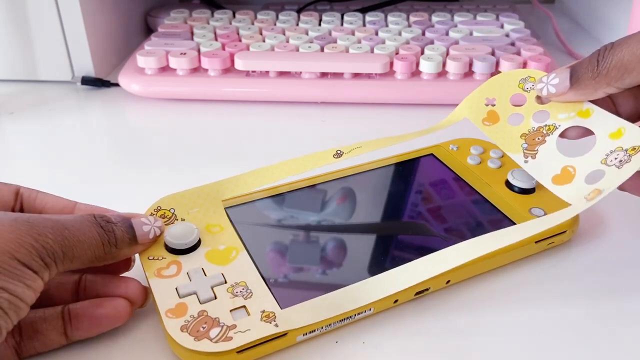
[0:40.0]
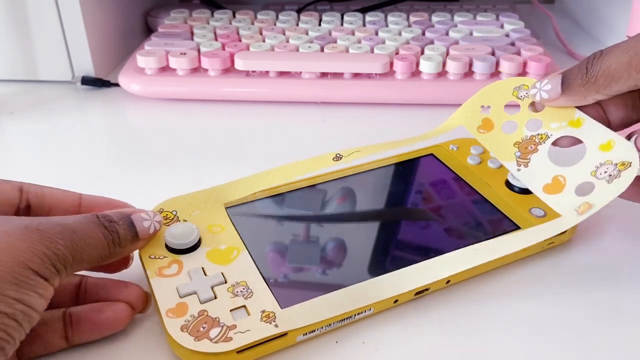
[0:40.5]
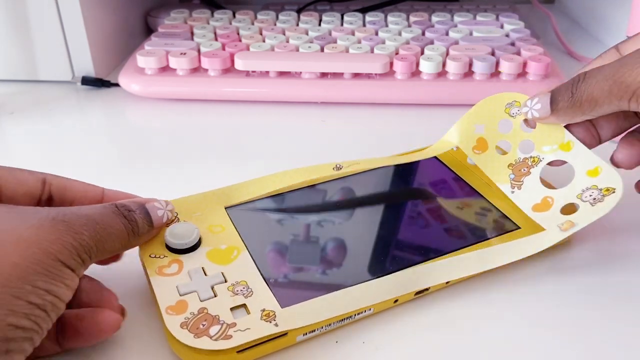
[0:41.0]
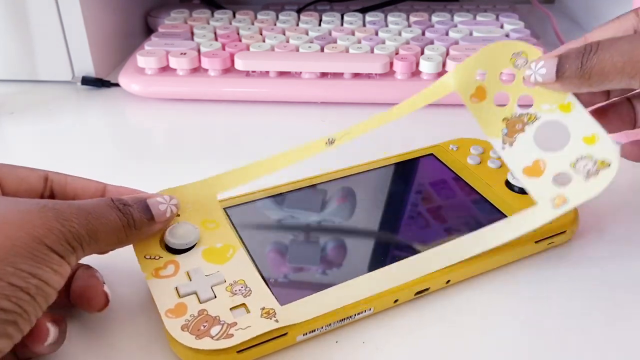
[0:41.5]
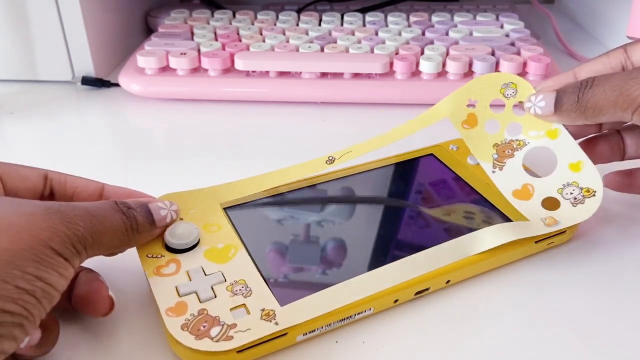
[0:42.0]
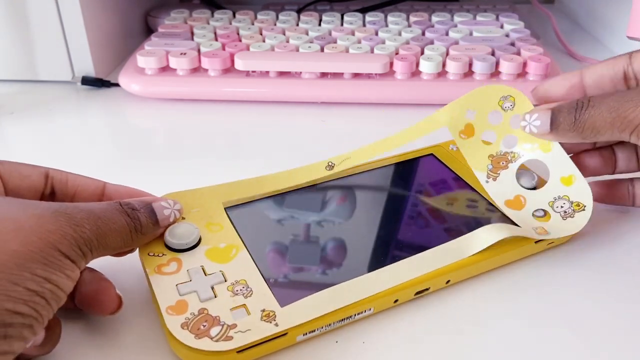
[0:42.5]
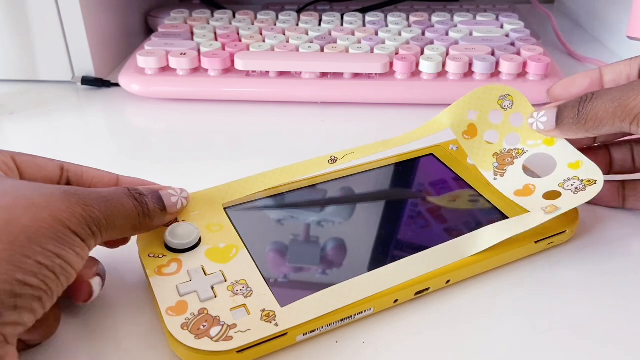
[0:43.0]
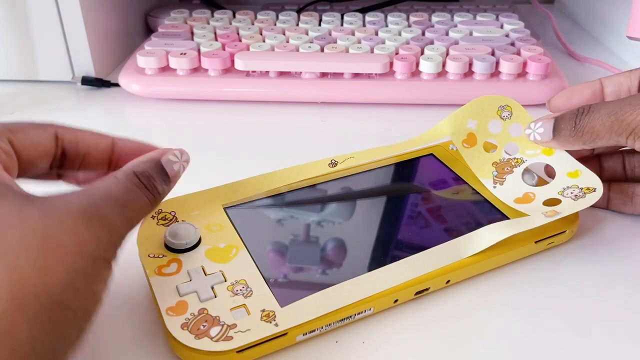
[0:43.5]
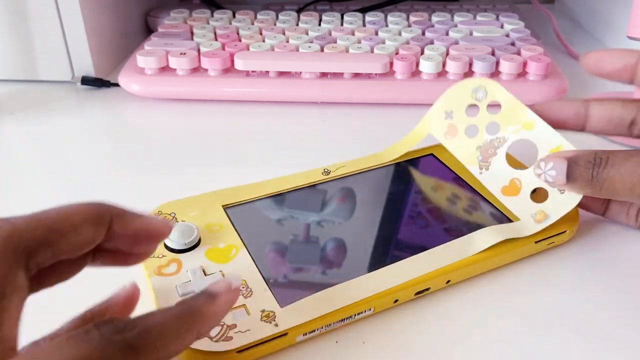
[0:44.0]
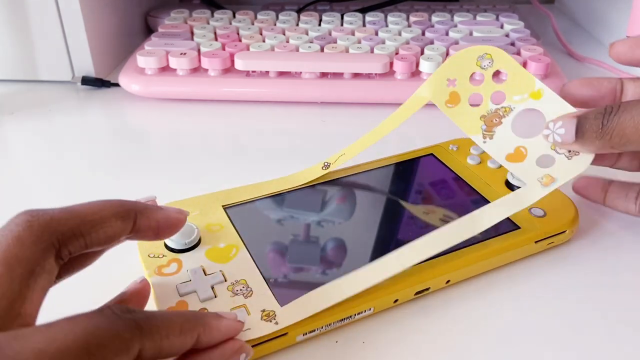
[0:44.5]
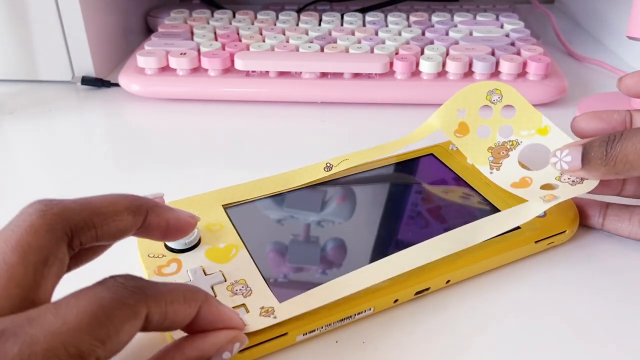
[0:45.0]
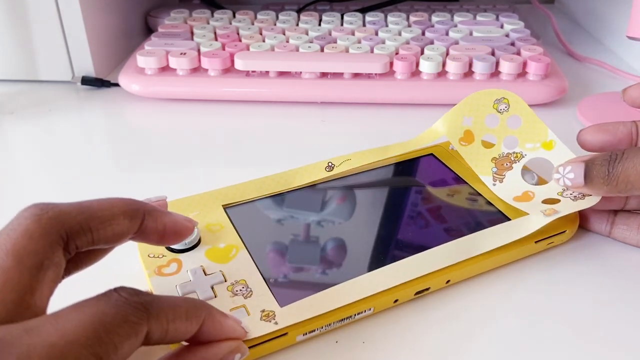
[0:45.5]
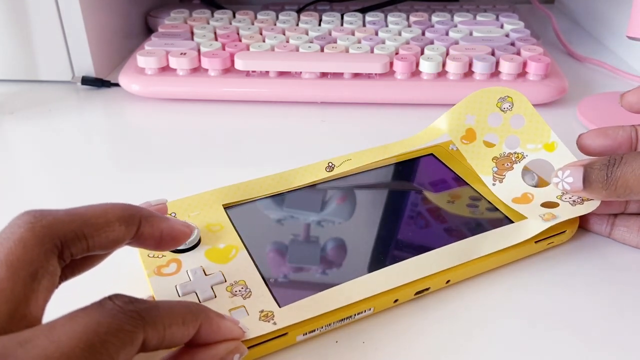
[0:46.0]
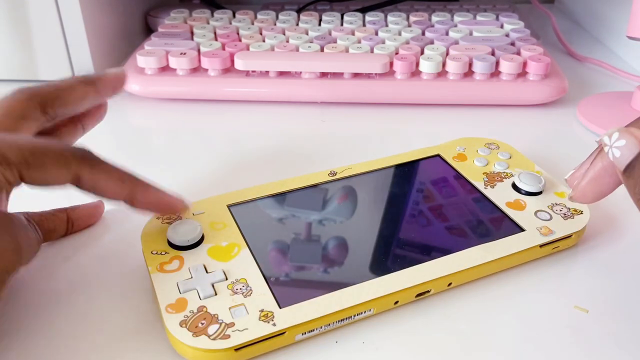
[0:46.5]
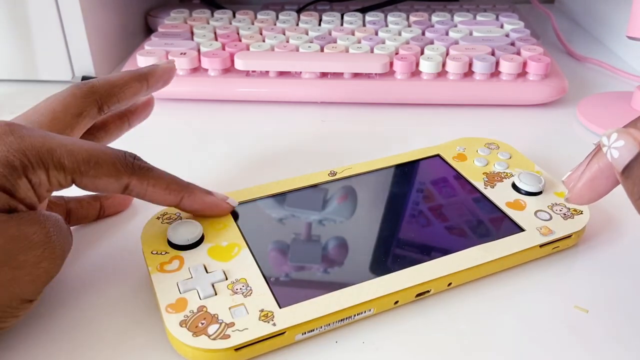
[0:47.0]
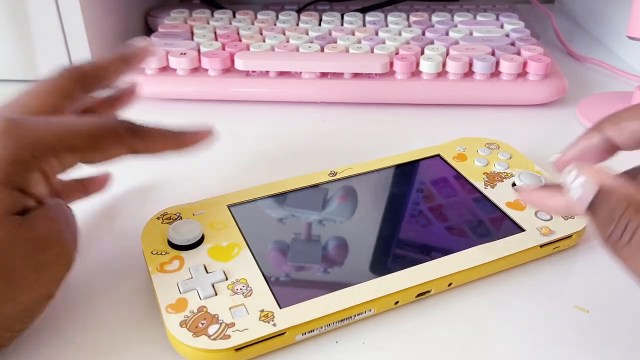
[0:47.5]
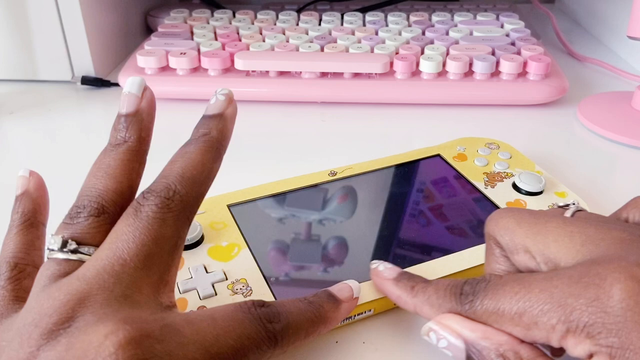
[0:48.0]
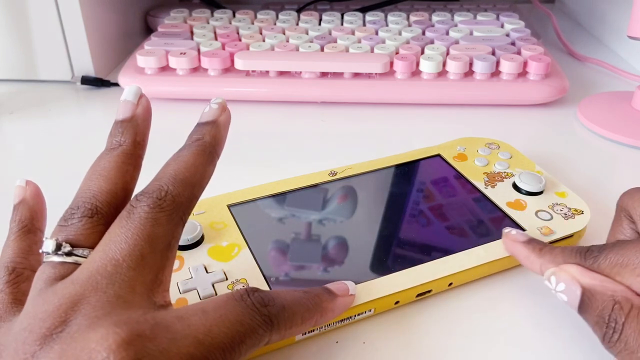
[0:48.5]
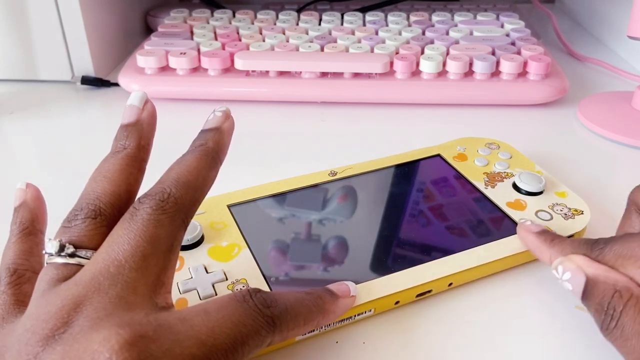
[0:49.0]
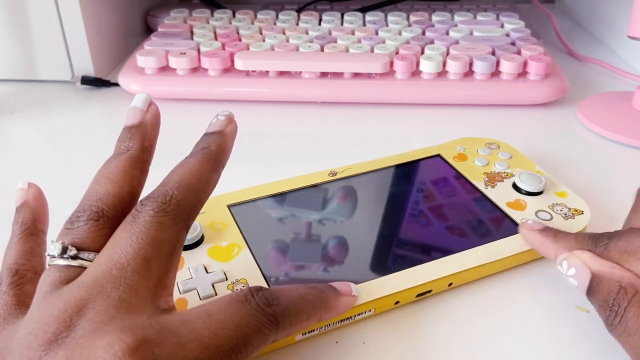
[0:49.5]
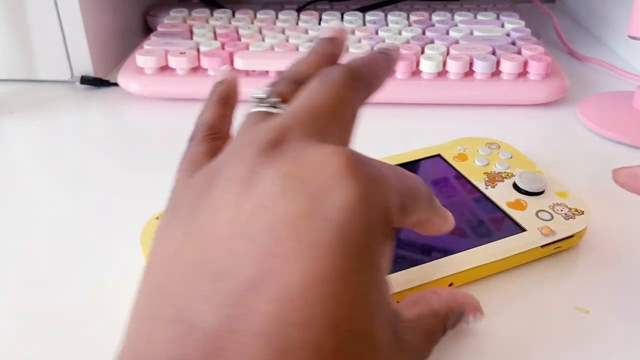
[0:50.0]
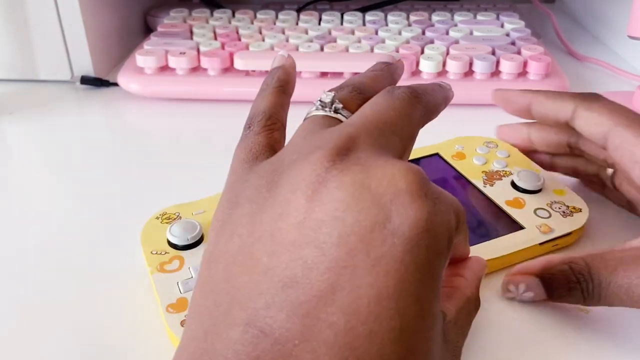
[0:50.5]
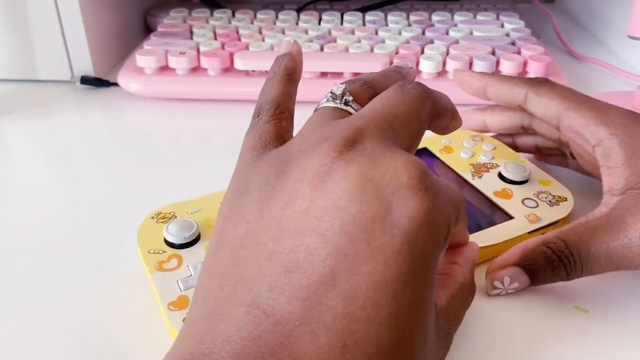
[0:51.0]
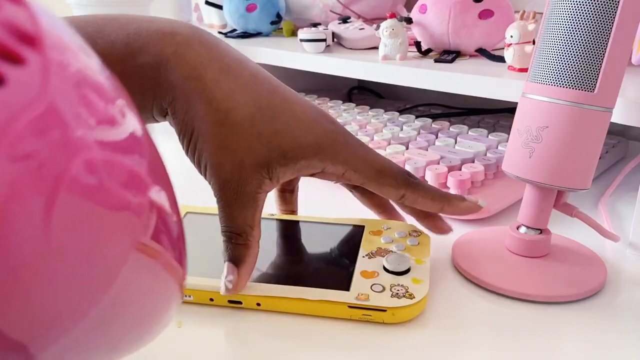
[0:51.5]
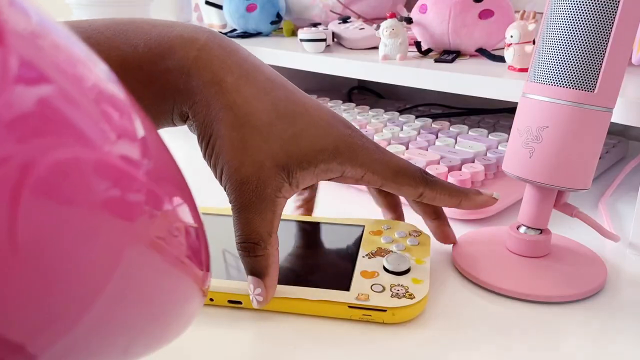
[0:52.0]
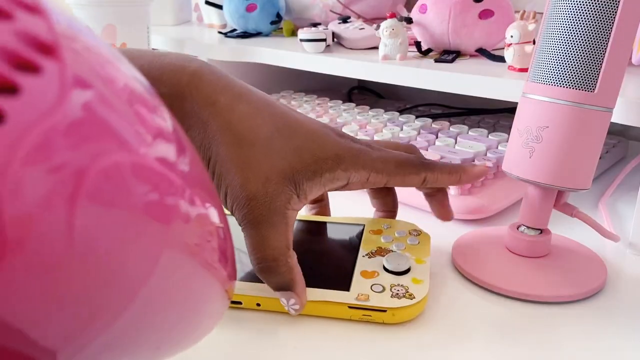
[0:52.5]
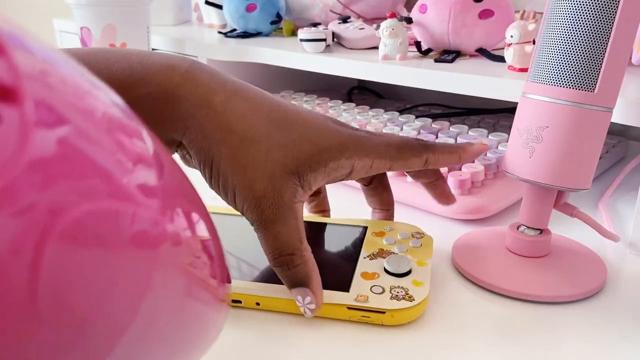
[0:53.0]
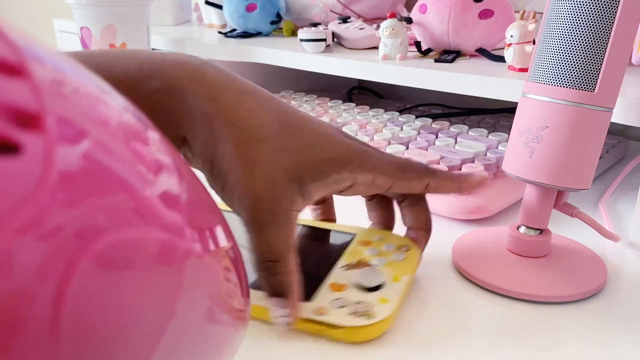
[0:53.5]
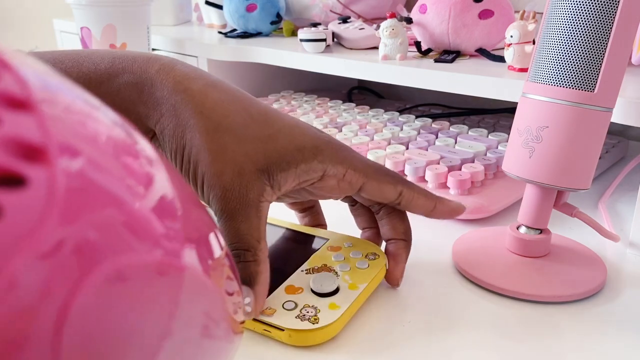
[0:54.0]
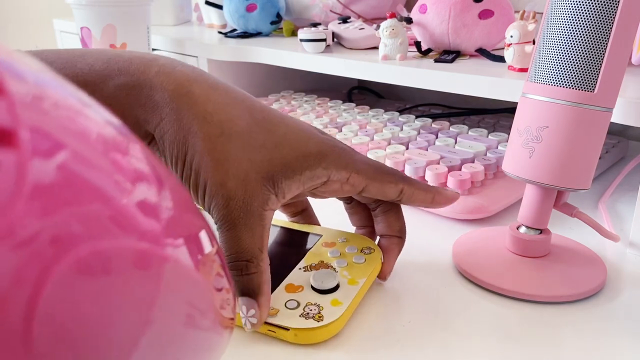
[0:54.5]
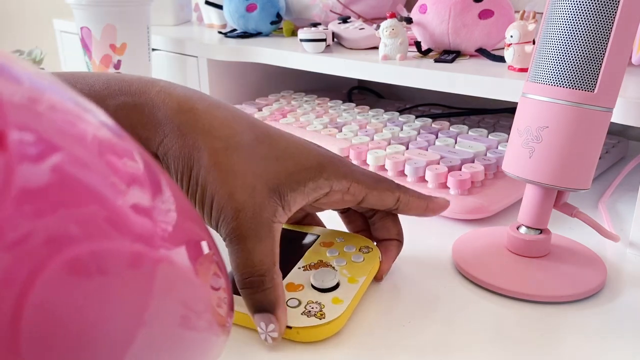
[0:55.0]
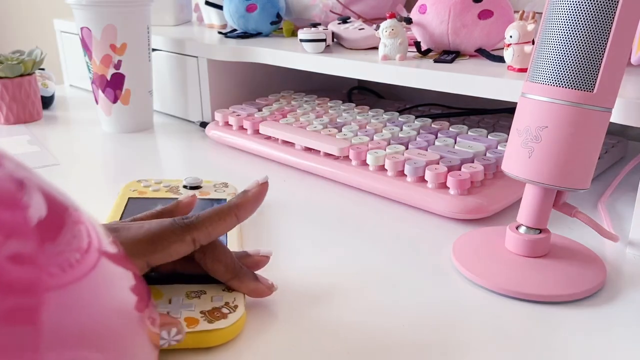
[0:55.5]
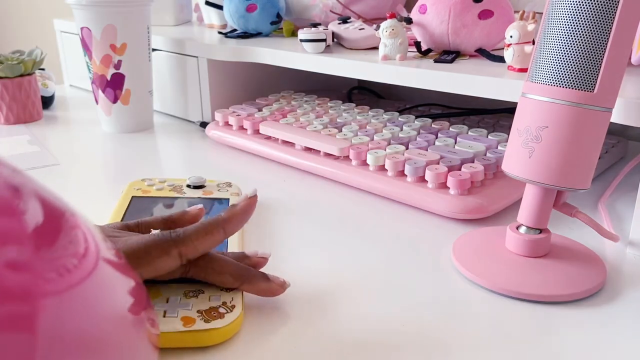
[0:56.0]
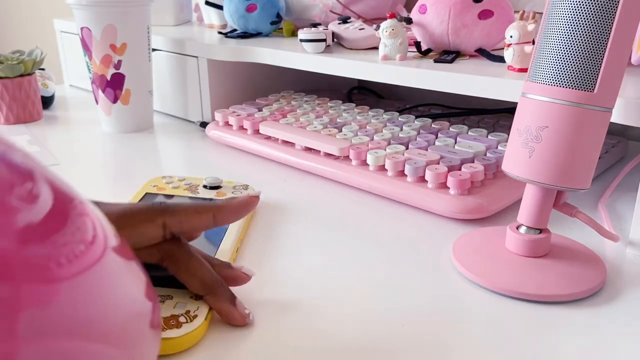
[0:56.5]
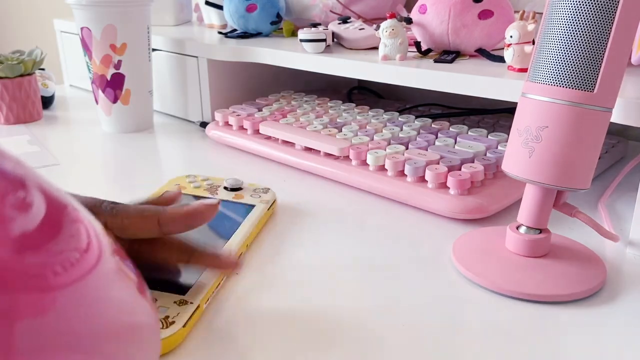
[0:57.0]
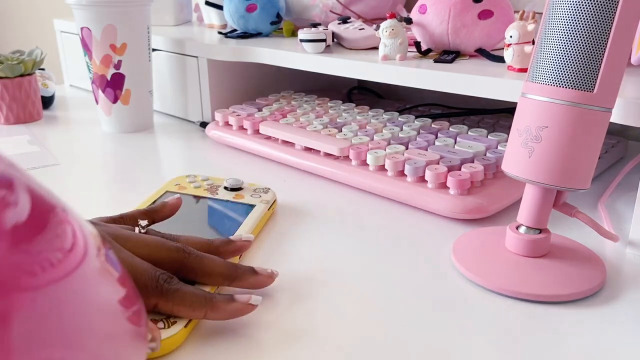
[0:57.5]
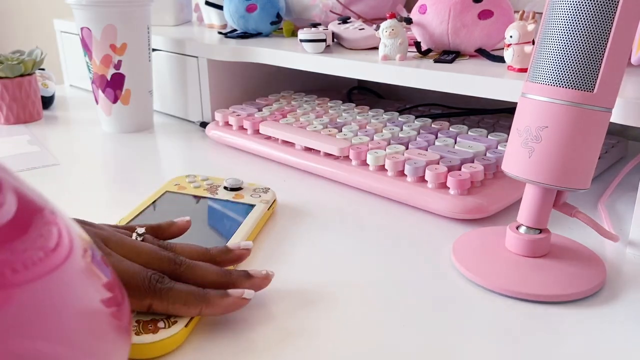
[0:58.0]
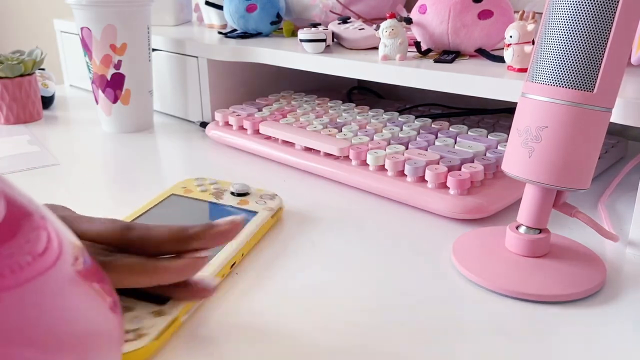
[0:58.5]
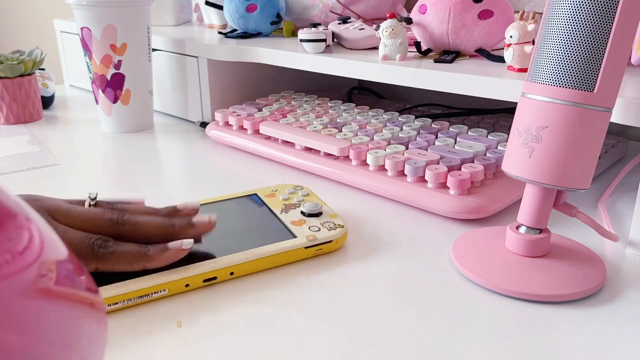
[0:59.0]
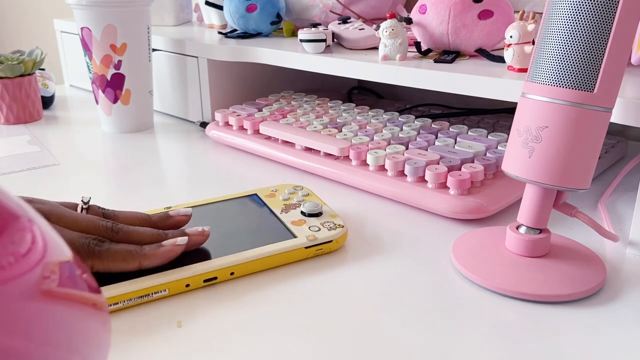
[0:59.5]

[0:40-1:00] A yellow console is positioned on a white surface. Two hands protrude into the frame from the bottom left and bottom right corners; one of them wears a light-colored ring, and the nails of both hands are pink and white. The hands place an adhesive on the upper surface of the console. The framing then changes: the bottom left corner is occupied by a more or less shiny pink object, a quite large pink microphone is visible on the right side, and the center is occupied by a keyboard with round purple, white and pink keys, rounded edges and a pink base. In the left half of the screen a hand moves on the surface of a console, which at one point is rotated on itself.